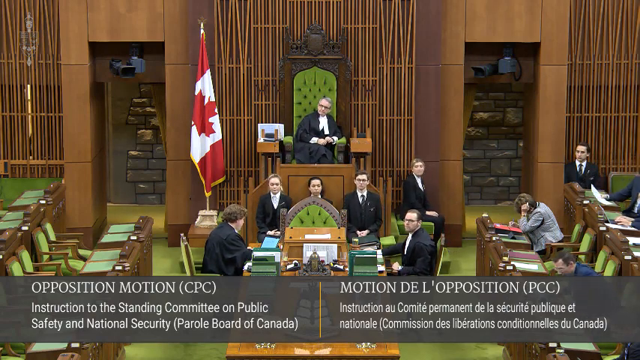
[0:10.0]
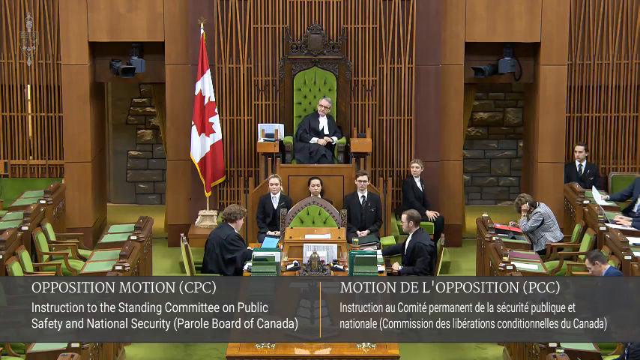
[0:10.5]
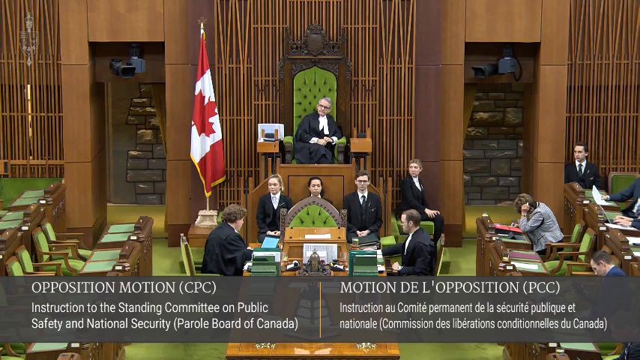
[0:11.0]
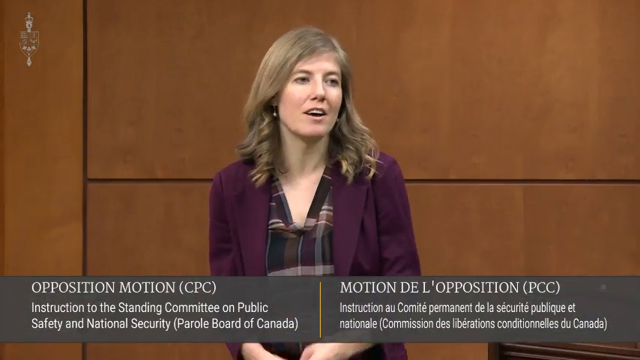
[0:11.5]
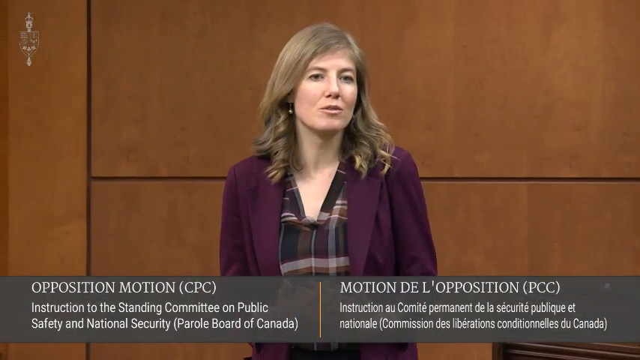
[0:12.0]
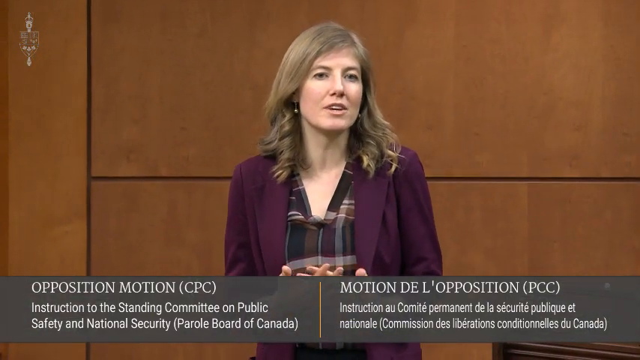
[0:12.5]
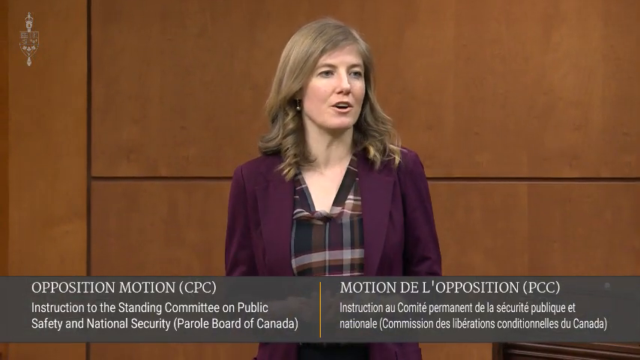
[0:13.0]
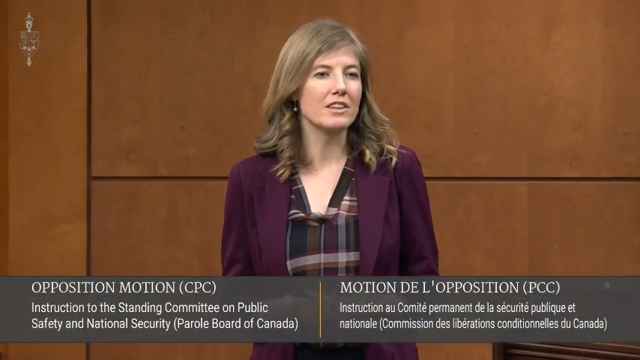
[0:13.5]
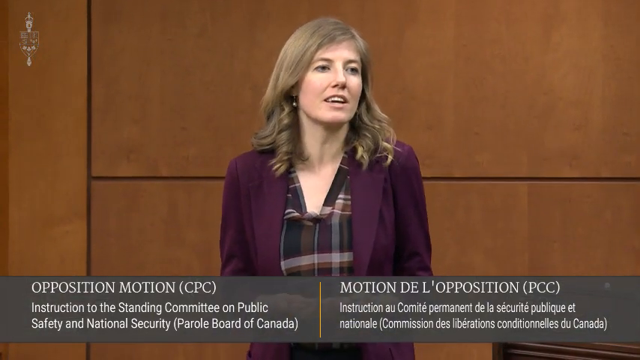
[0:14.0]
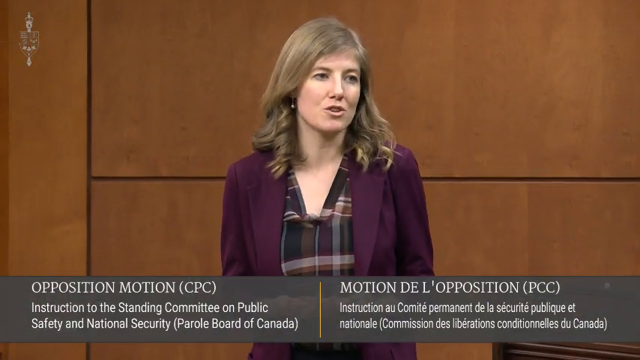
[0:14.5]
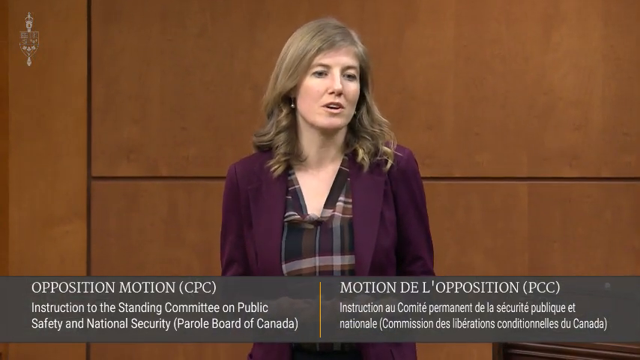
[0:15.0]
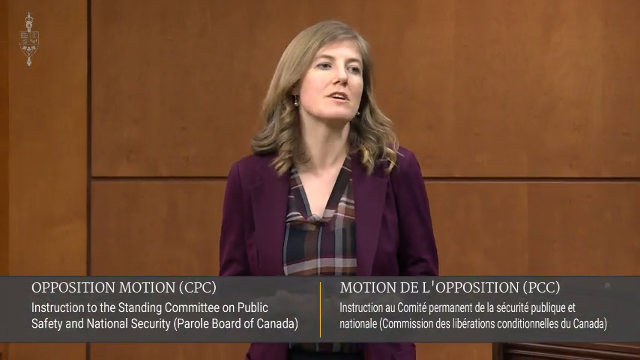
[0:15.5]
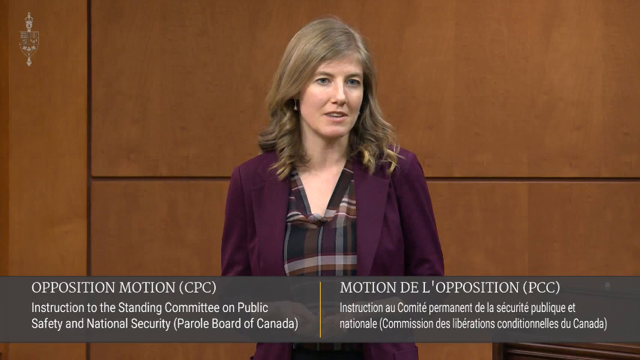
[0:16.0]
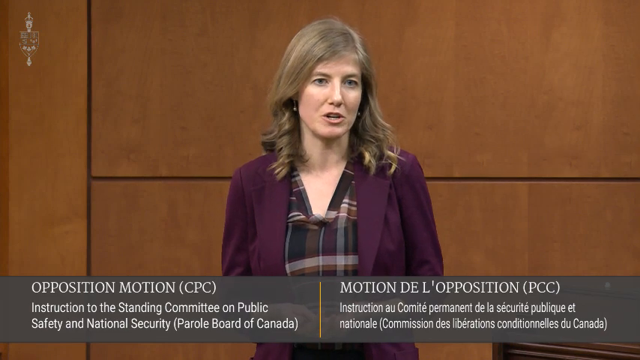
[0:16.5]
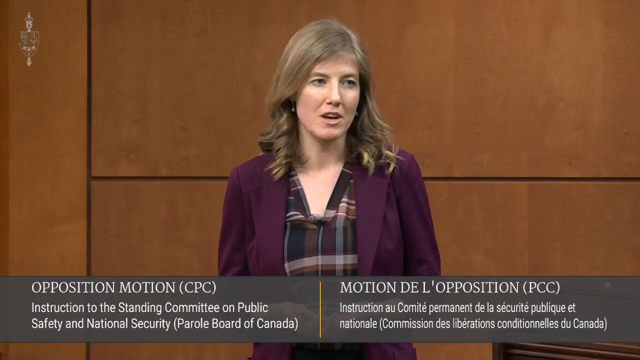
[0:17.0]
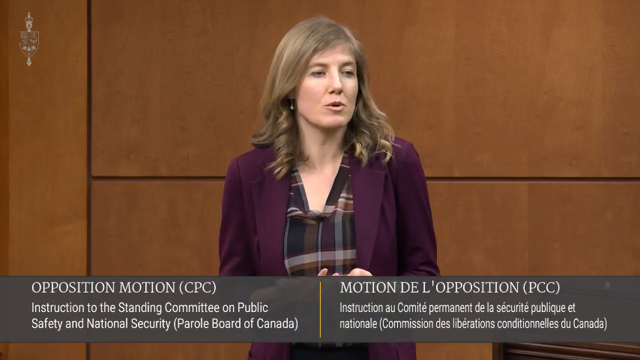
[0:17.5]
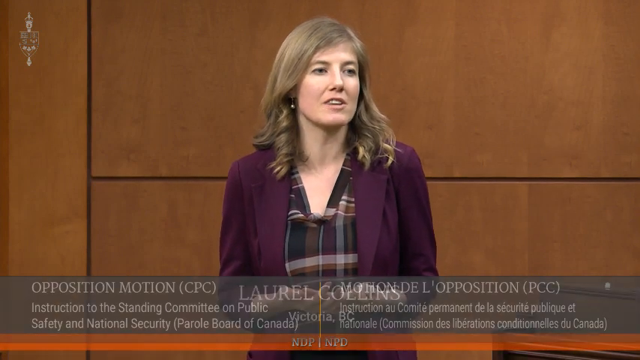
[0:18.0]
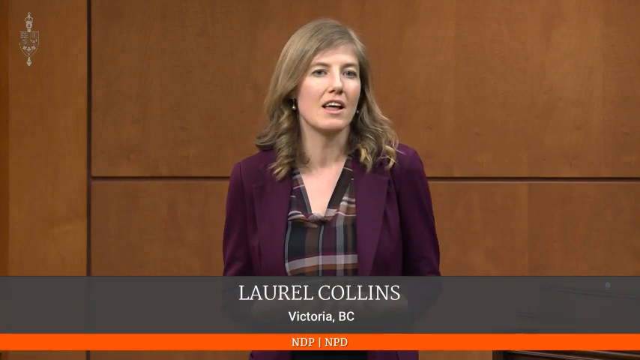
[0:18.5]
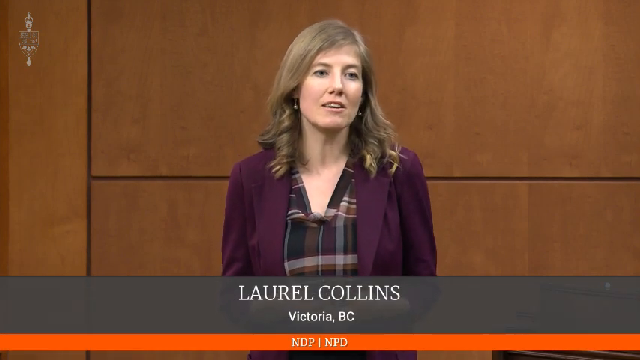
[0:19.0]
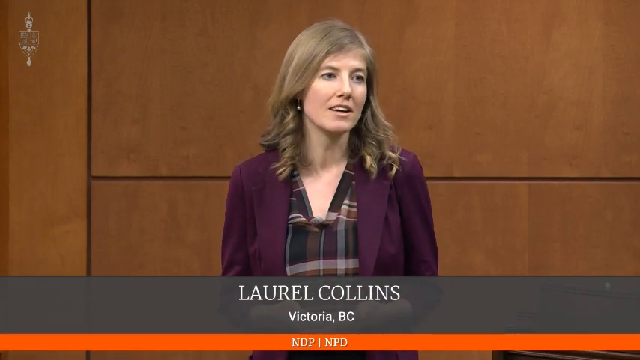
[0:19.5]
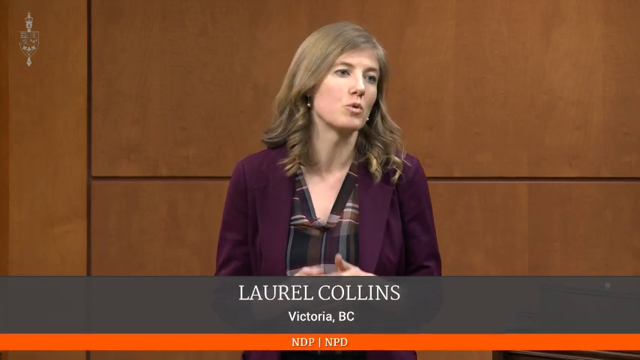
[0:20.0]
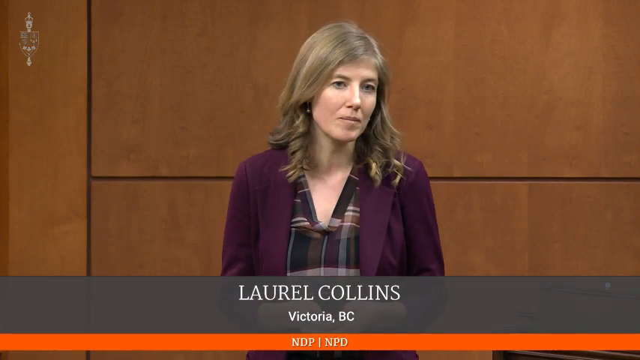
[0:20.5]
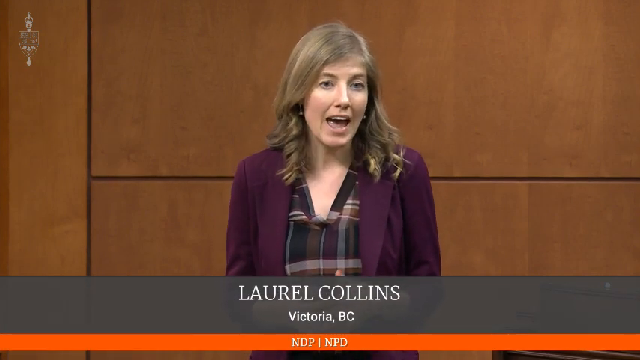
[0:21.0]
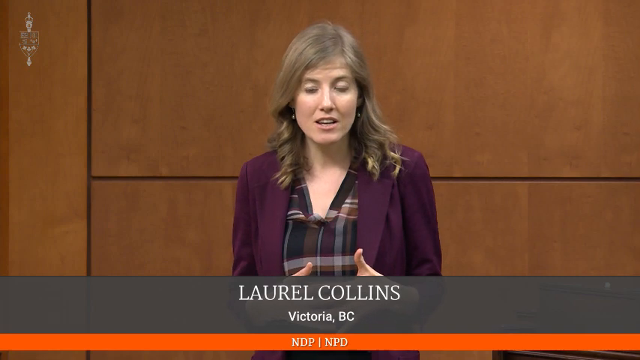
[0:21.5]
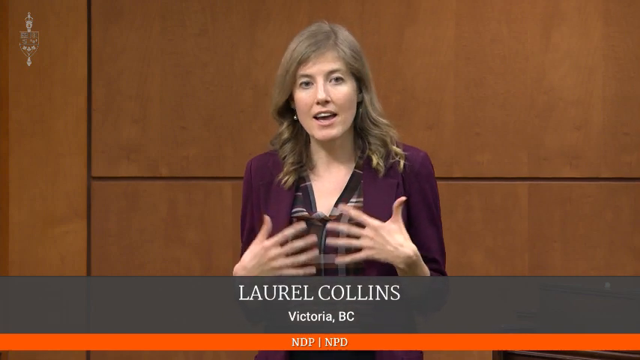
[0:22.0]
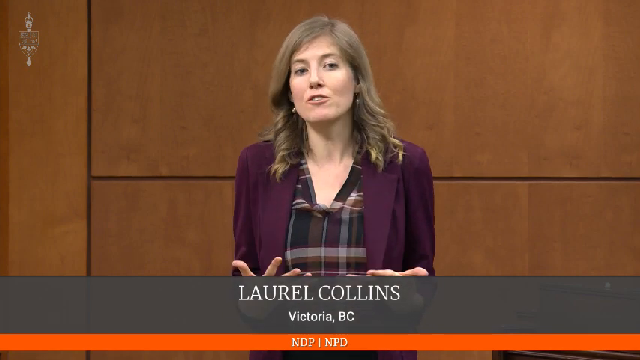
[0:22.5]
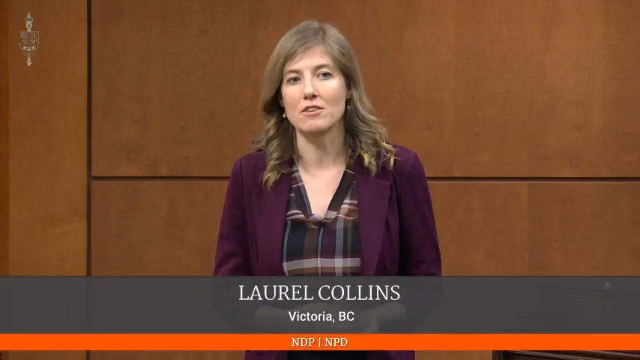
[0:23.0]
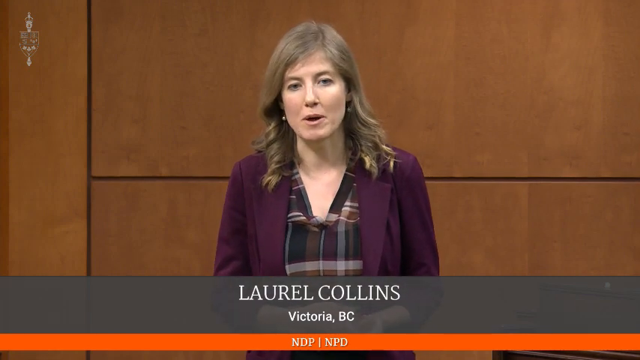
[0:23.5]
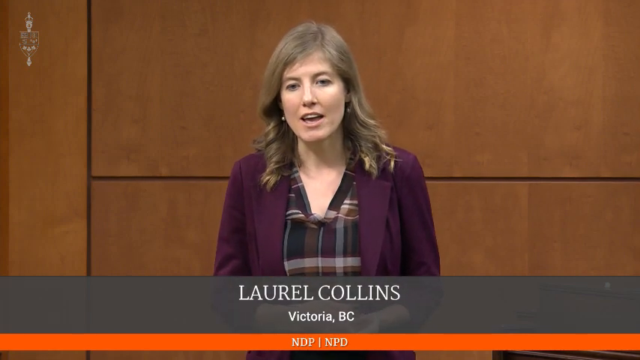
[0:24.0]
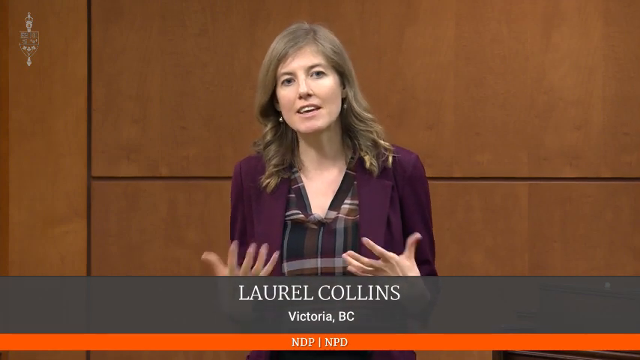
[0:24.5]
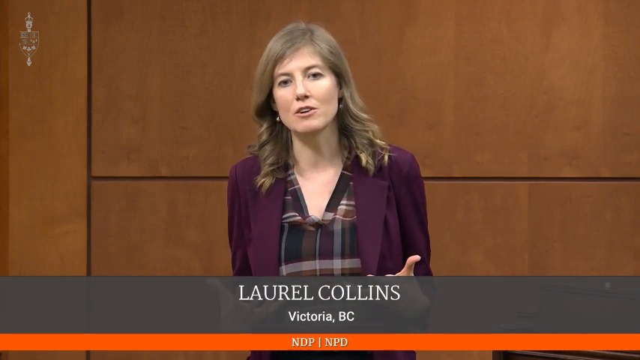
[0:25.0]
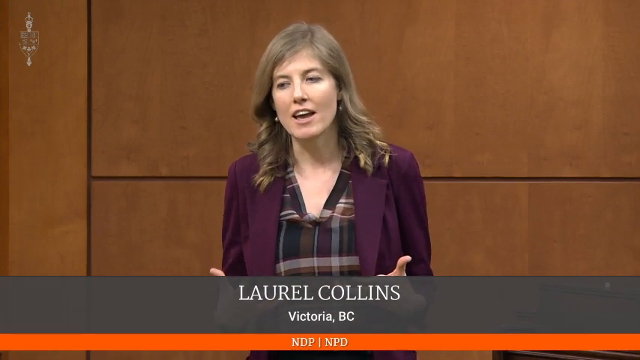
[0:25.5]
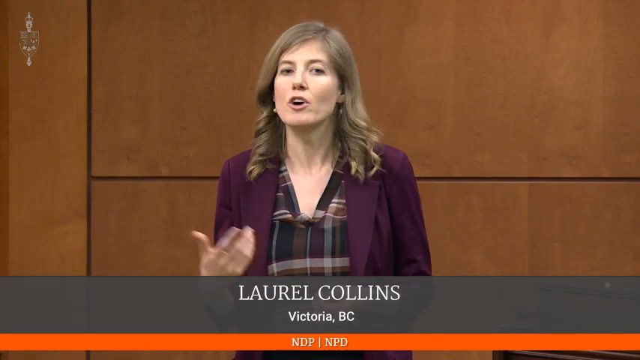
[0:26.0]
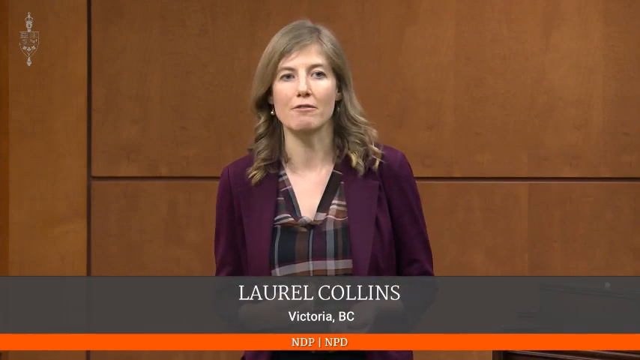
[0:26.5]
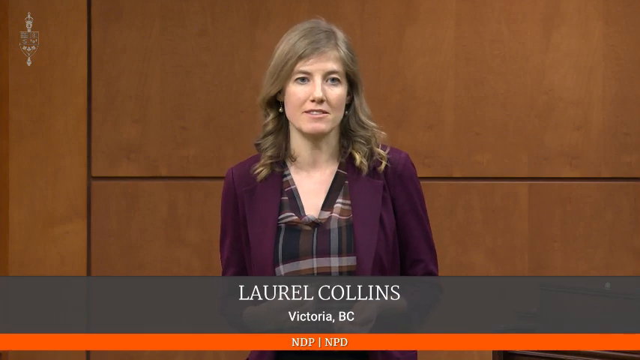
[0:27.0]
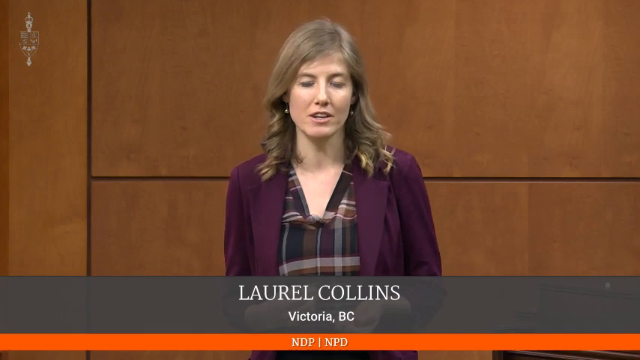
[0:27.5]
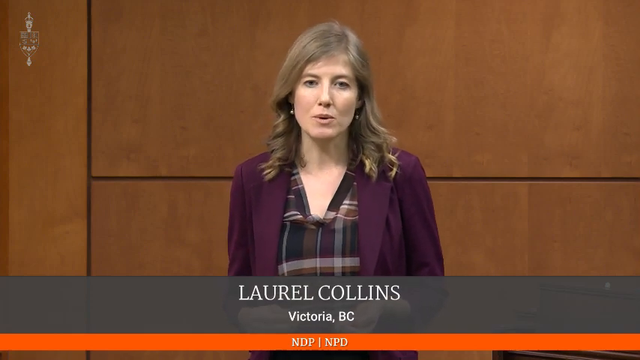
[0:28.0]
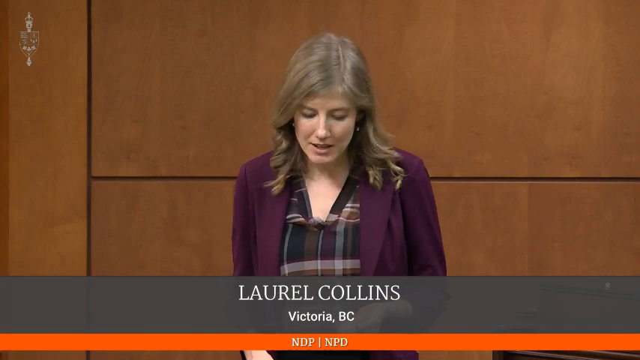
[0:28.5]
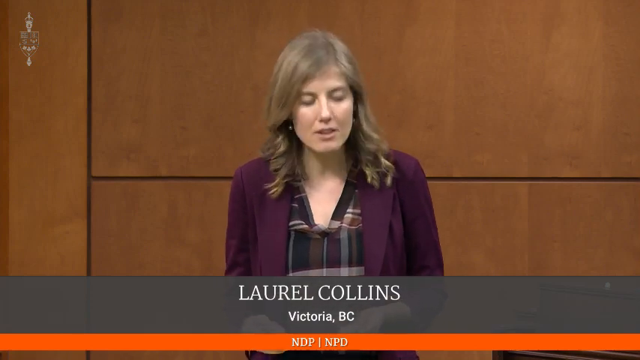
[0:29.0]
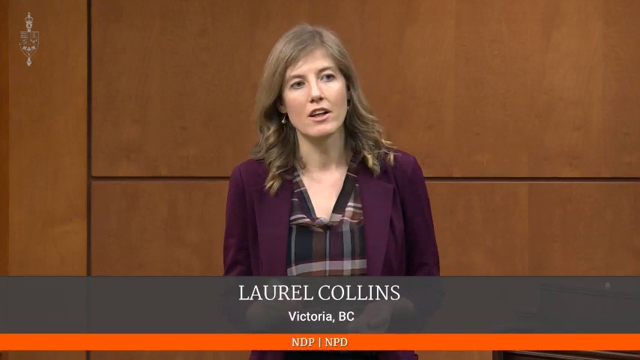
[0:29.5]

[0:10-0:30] An overview of the courtroom shows many people sitting, all in professional clothing. A large red and white Canadian flag is to the left side of the judge, the walls are brown, and the upholstery is green. A blackish-gray banner split in half runs along the bottom of the screen: the left side reads "Opposition Motion (CPC)" and the right side reads "Motion Dell Opposition (PCC)". The scene then transitions to a close-up of a blonde Caucasian woman wearing a purple, black and white plaid shirt with a purple suit jacket over it. She is speaking and looks like she is looking toward the right side of the screen. A blackish-gray banner with white text pops up at the bottom of the screen, reading "Laurel Collins" with "Victoria BC" below it in smaller font. The woman continues speaking, using her hands as she talks; at one point she looks up at the ceiling, and she speaks directly to or towards the camera.